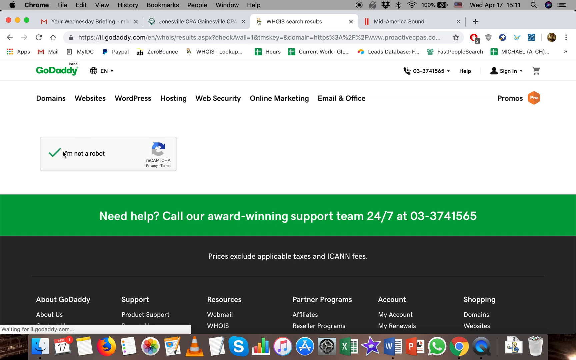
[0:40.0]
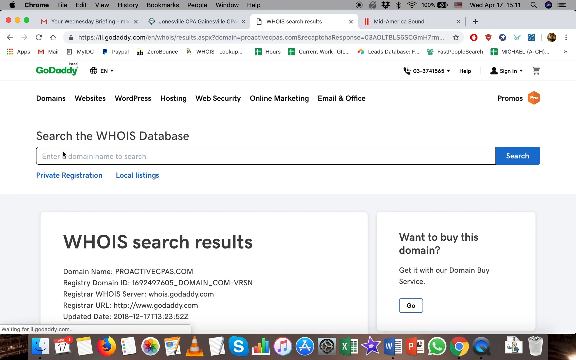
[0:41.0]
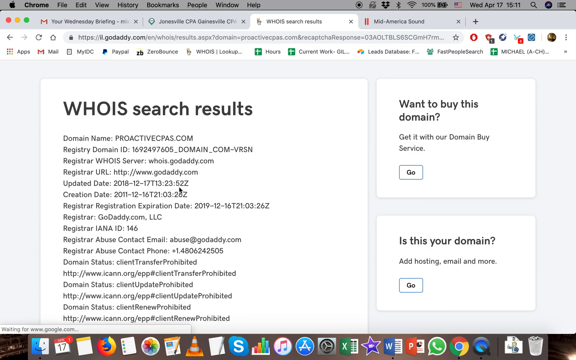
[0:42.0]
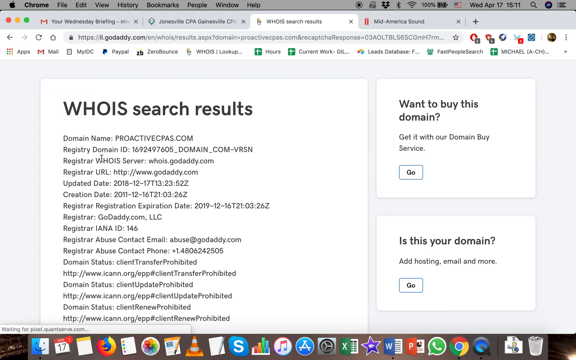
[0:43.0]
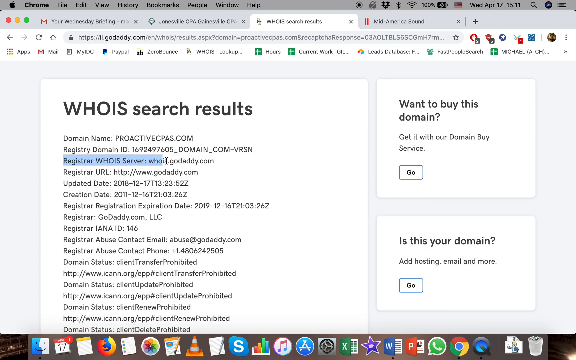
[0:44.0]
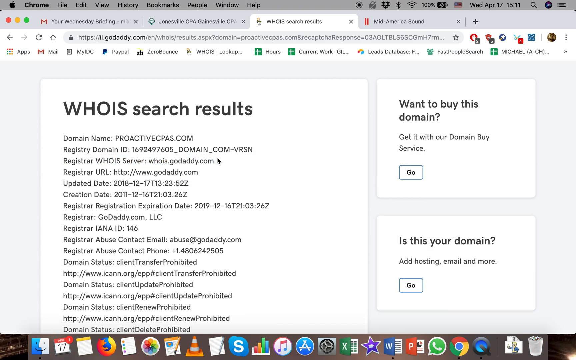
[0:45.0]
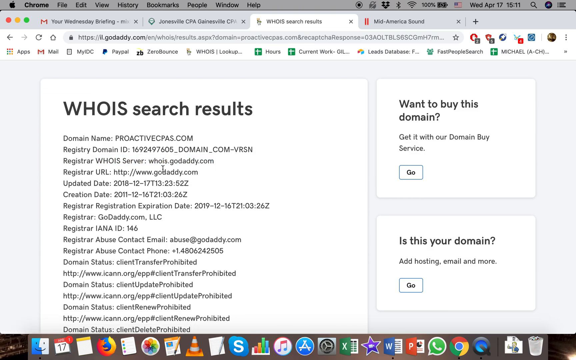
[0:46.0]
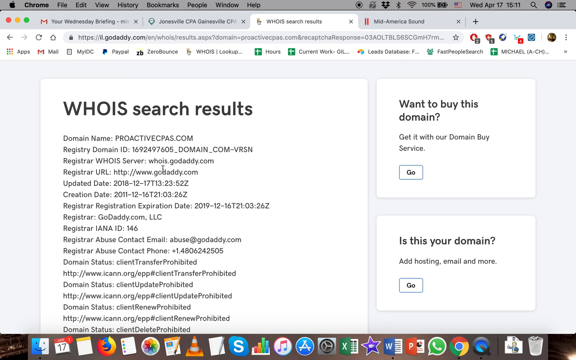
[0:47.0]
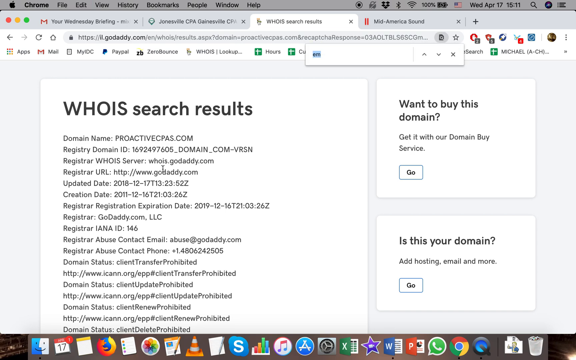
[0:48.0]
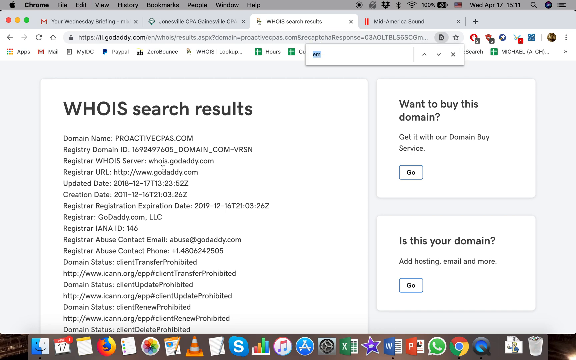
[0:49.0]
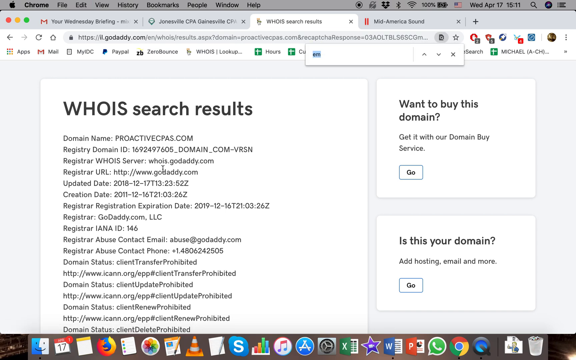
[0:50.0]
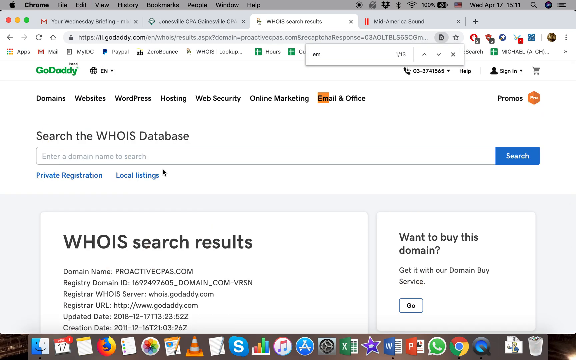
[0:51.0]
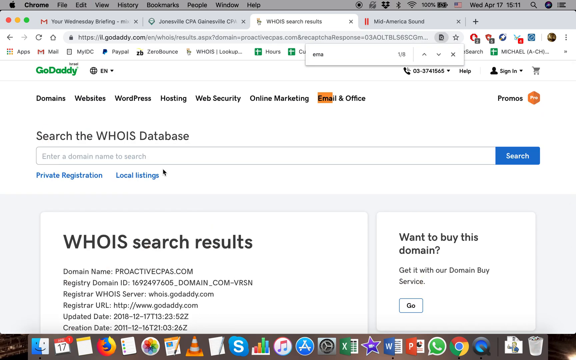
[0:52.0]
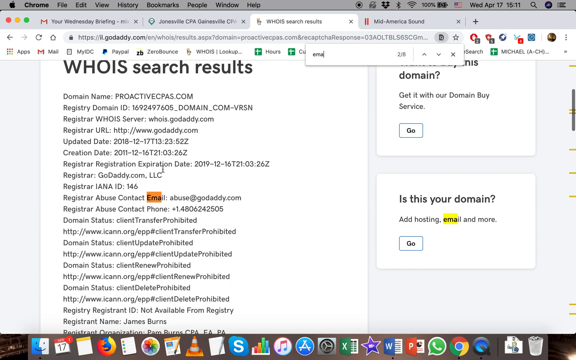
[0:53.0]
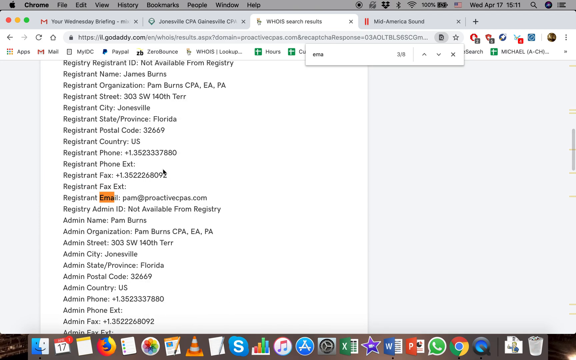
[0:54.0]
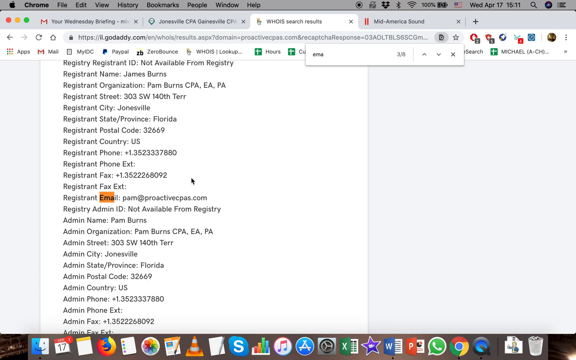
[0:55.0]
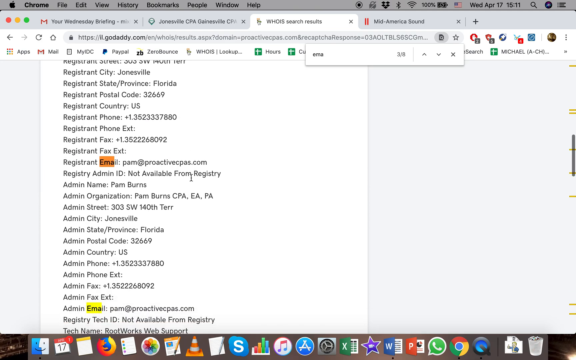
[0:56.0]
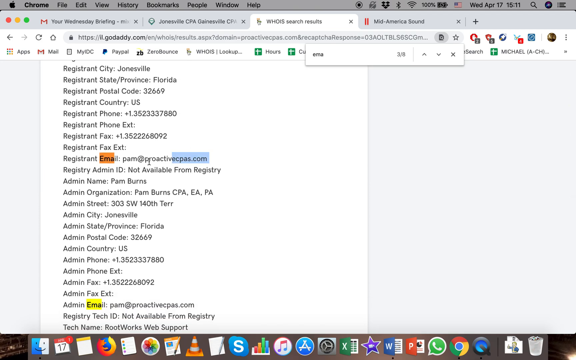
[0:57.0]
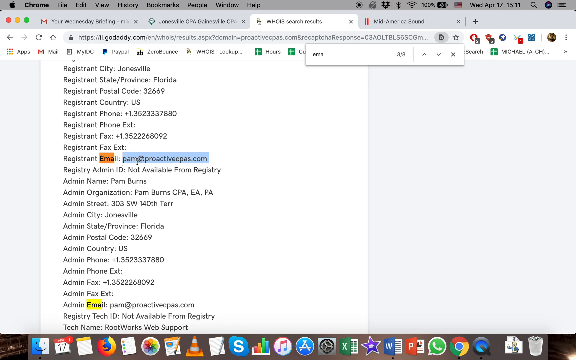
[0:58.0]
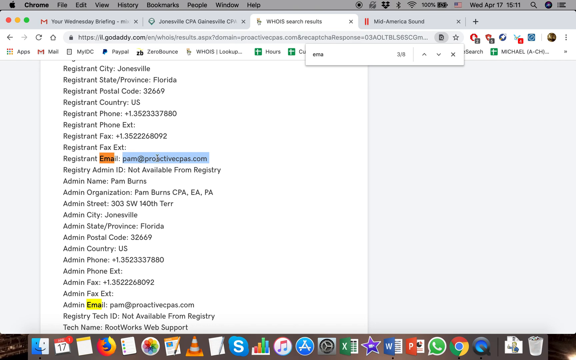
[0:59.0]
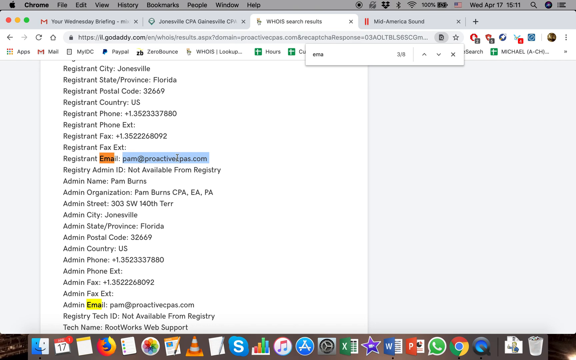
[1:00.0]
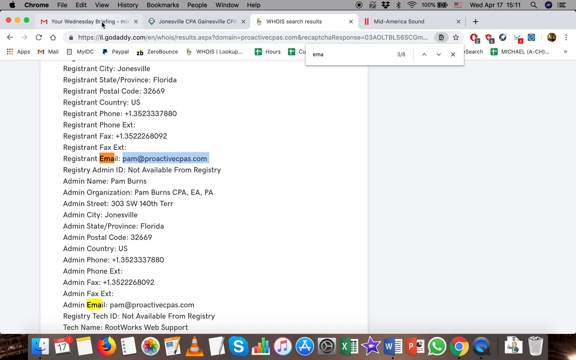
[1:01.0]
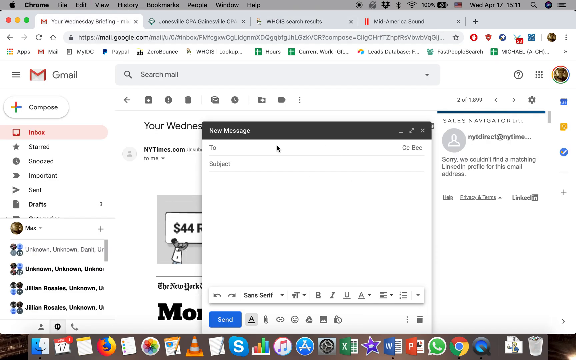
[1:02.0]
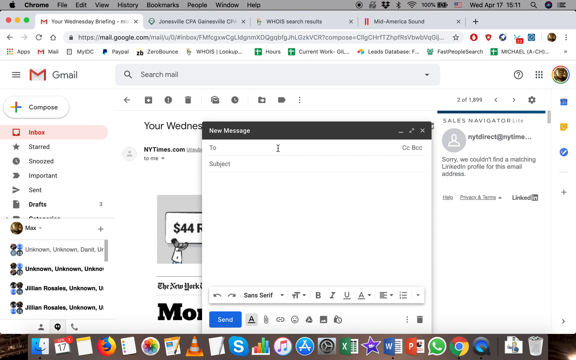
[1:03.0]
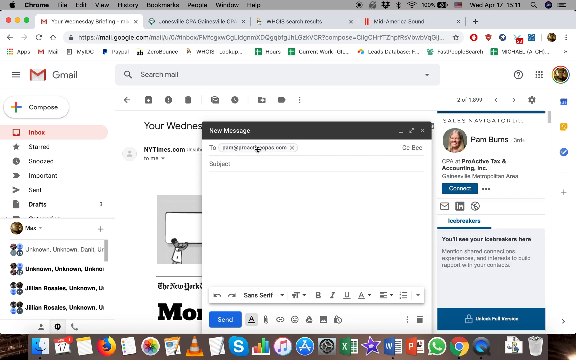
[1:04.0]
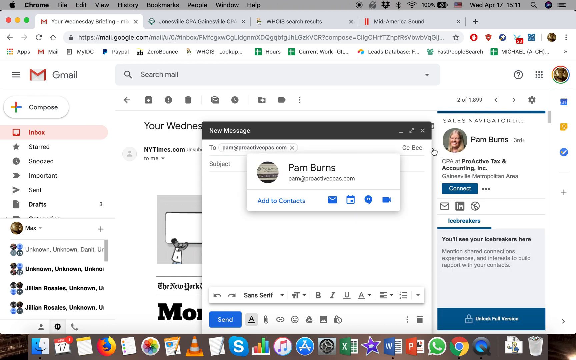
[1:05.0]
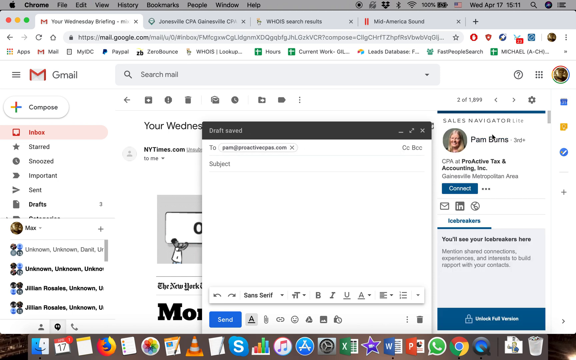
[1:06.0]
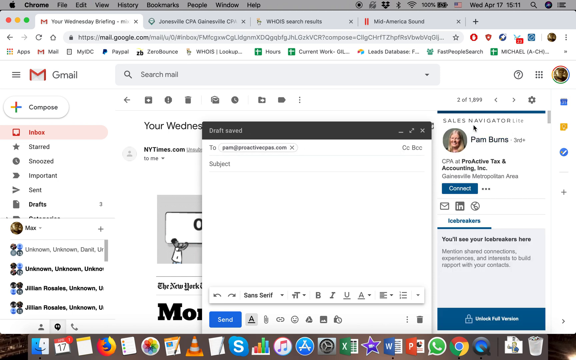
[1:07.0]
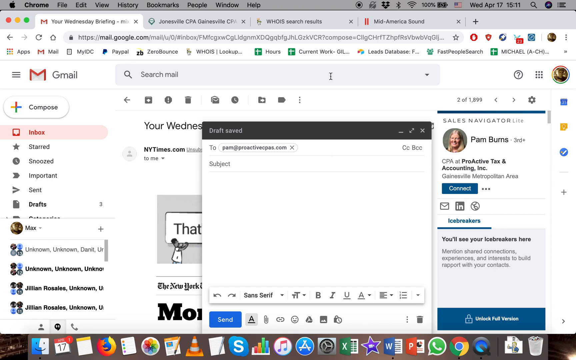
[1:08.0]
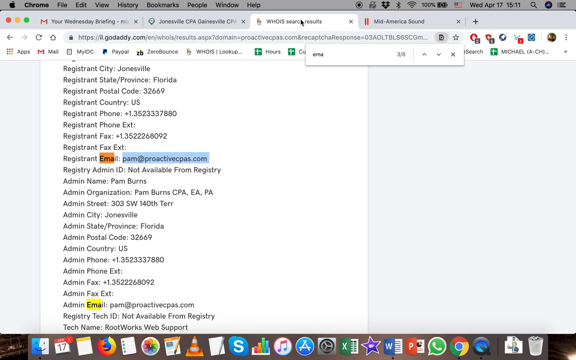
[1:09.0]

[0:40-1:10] The proactivecpaas.com search opens and the Whois search results show a bunch of information: first the domain name, which is the URL, then the registry domain ID, then register Whois server, register URL, updated date, creation date, registration expiration date, and so on. The user highlights the third item, the register Whois server, which is whois.godaddy.com. They then press Ctrl-F and type email, which goes to the first email address, the registrar abuse contact email, abuse@godaddy.com. Next is the registrant email, pam@proactivecpaas.com, which they highlight from right to left with the mouse and then move the cursor left and right over. They copy it, go to their email, and paste it to send an email to this person.